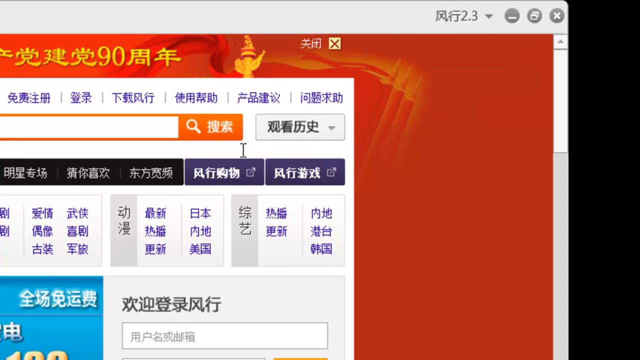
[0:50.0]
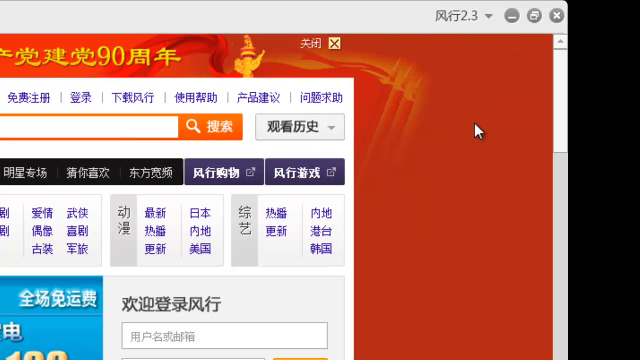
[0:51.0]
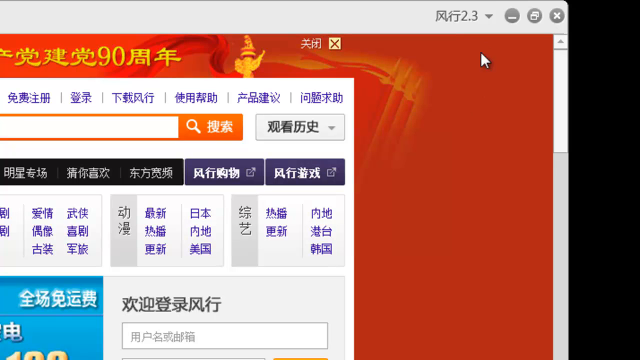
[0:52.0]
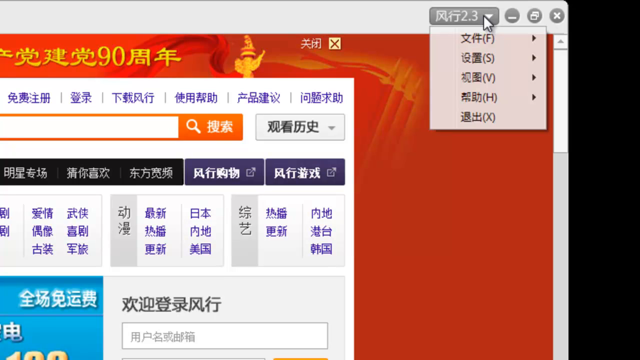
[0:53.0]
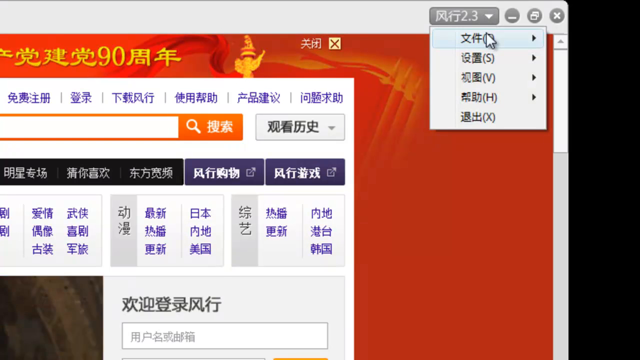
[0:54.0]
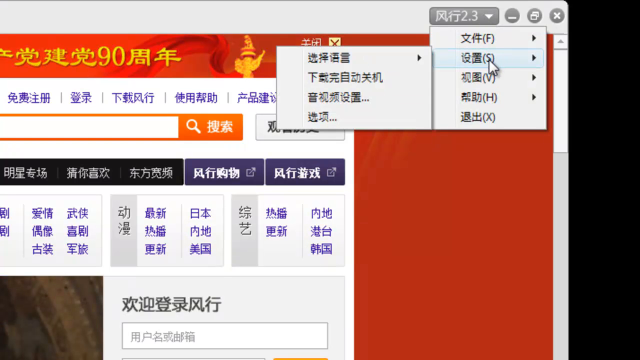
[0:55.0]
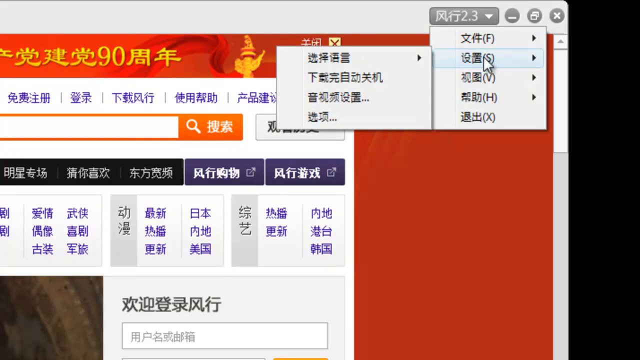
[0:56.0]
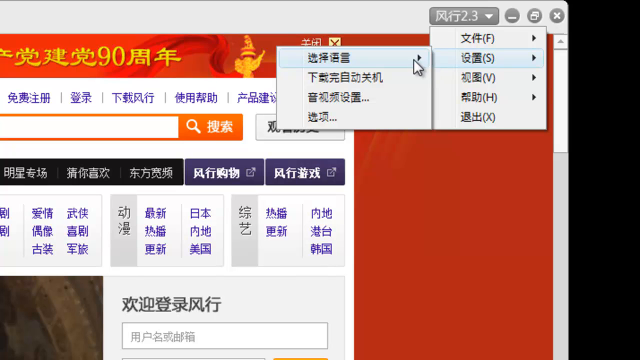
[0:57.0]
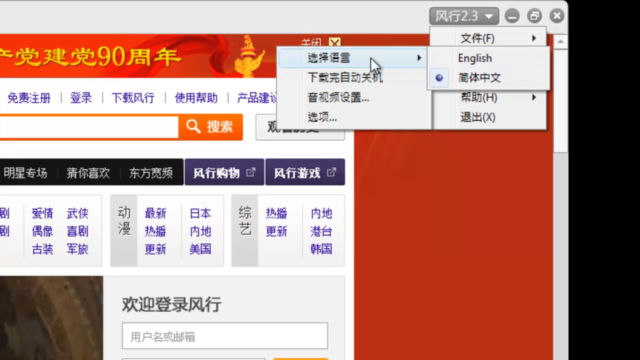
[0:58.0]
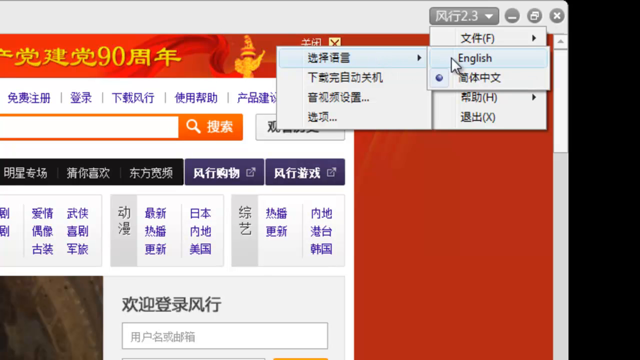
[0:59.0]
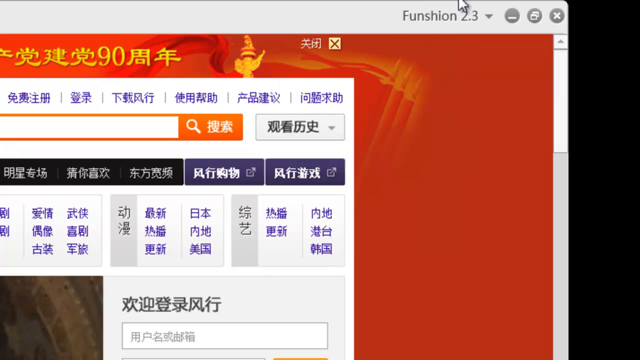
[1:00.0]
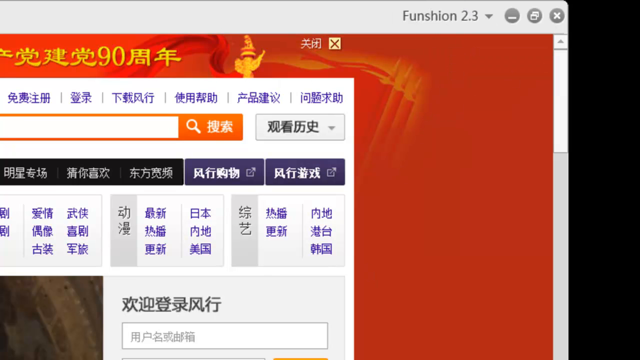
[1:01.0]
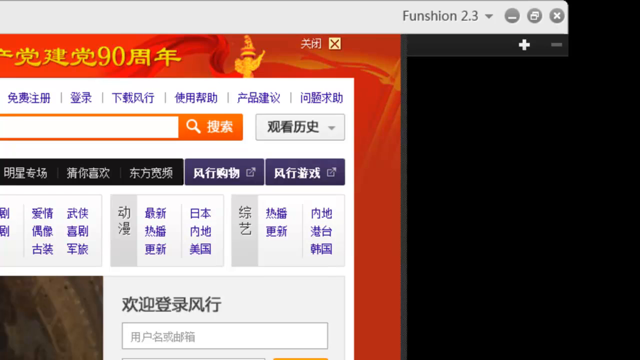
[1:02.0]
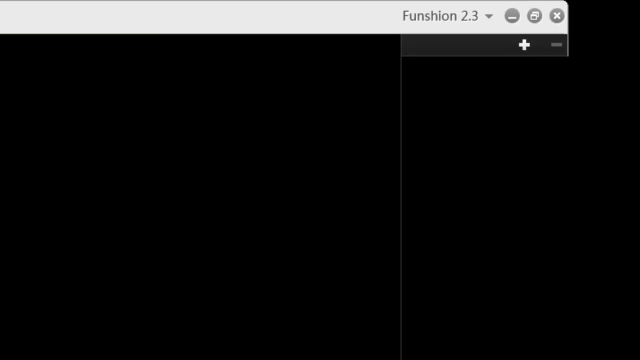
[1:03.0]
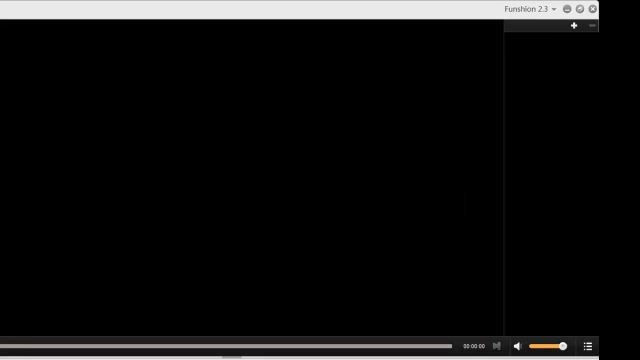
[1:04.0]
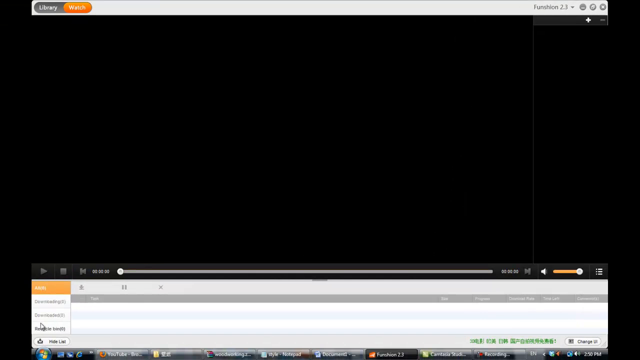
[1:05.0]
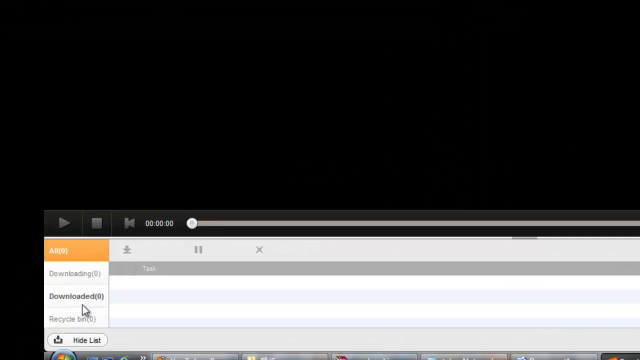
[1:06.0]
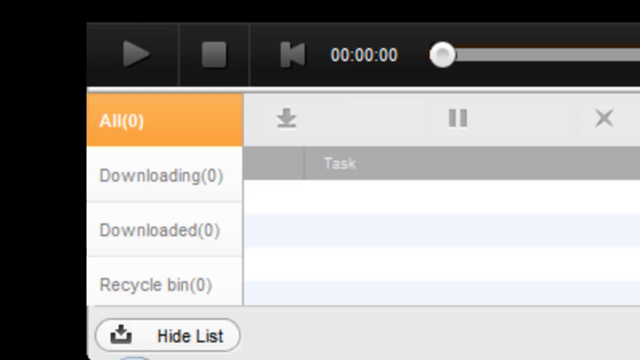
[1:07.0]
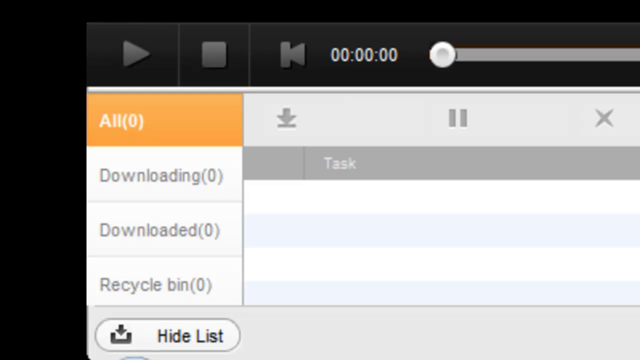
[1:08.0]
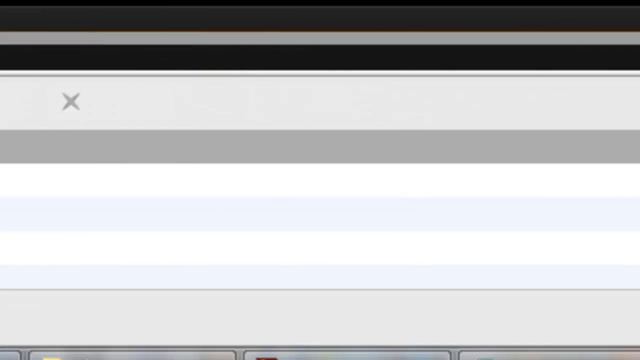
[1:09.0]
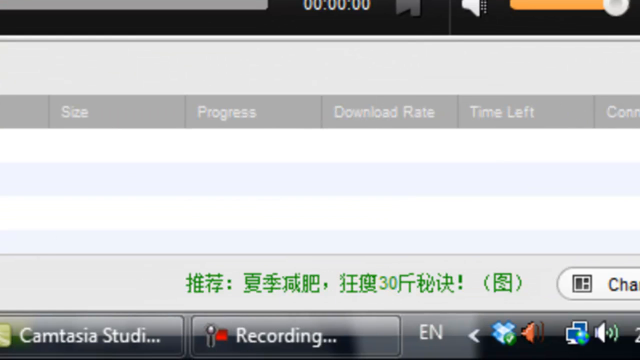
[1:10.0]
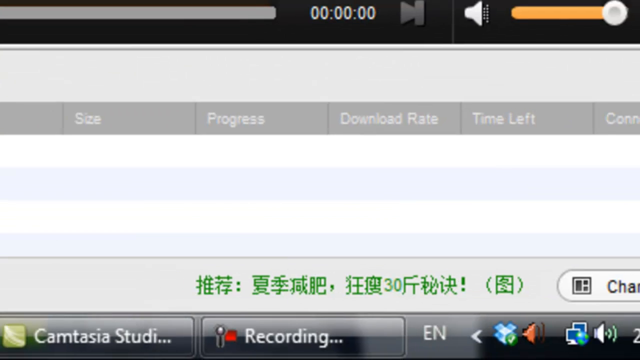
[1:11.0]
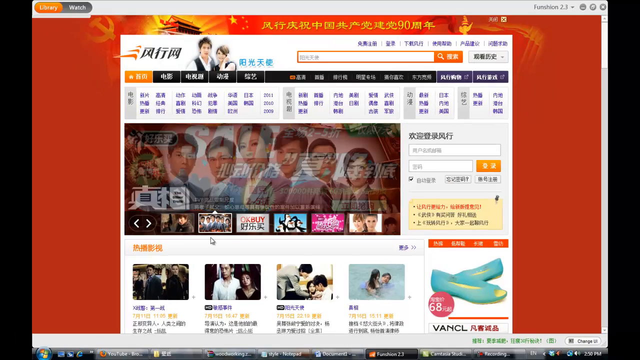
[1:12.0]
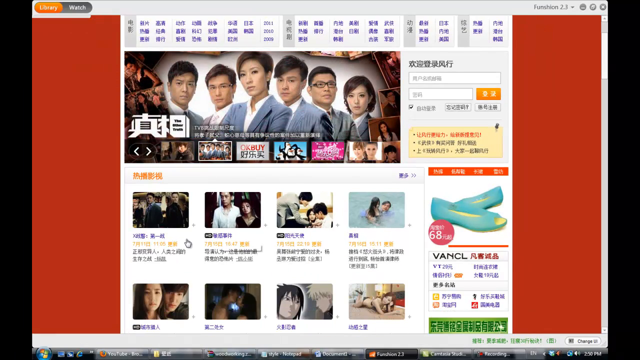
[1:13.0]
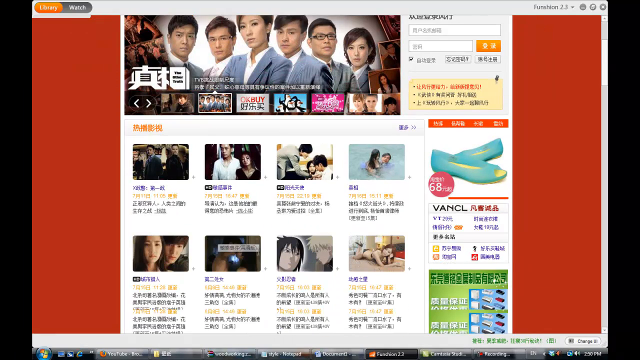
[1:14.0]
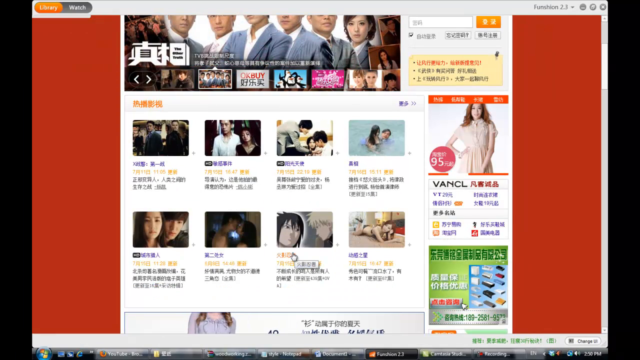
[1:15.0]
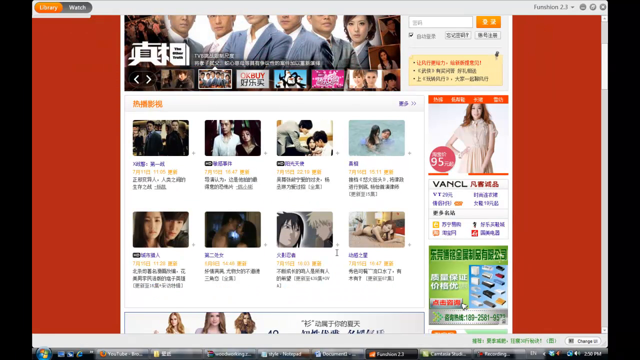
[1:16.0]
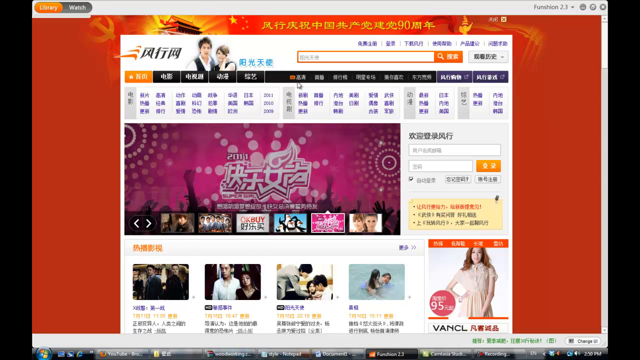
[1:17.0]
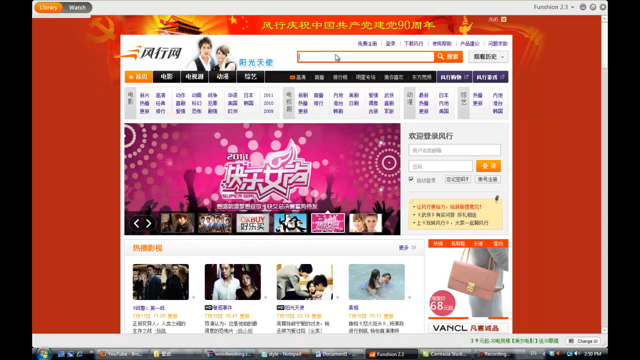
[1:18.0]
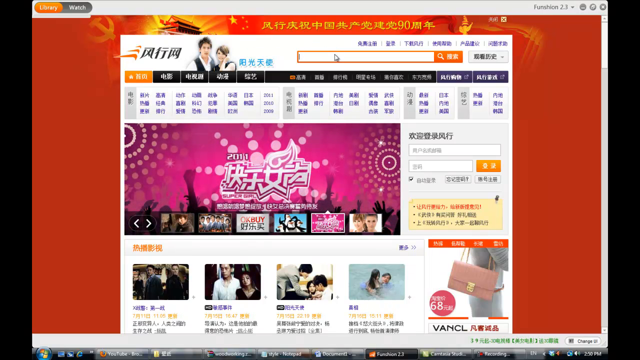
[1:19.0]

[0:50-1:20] The user goes into one of the feature buttons in the top right of the website, where the function and the view can be changed. In the bottom left corner of the website are settings for the upload and download rate. The website appears to be some type of social media app with different files on it, and the video seems to show how to download and upload files and videos. There are options to change the exposure, the view and the language, such as to English. In the bottom right corner is a place that displays the videos downloaded from the website.